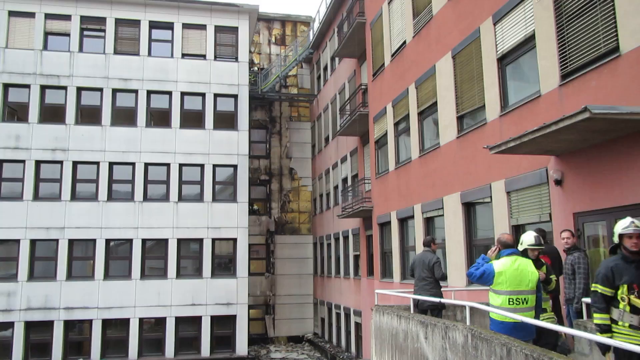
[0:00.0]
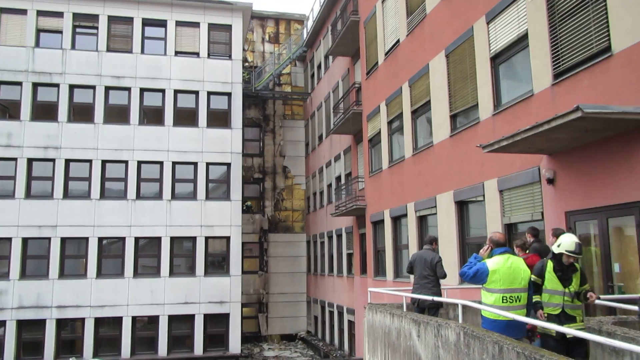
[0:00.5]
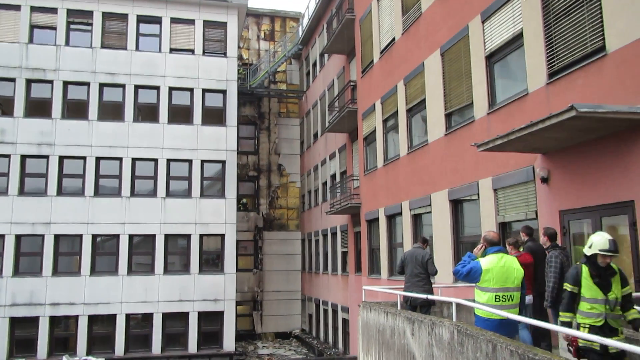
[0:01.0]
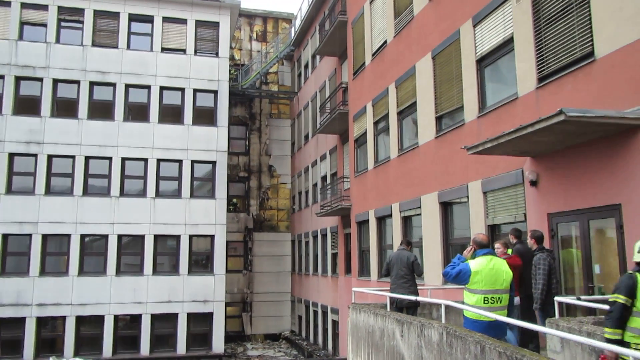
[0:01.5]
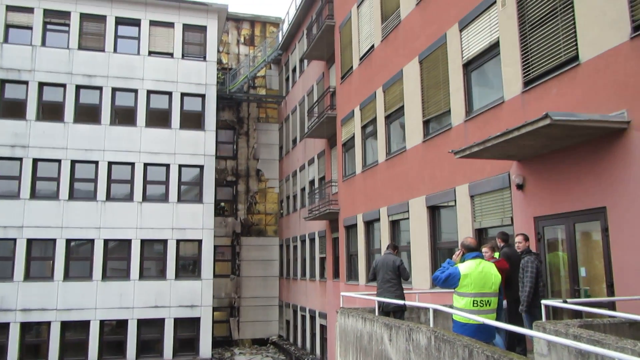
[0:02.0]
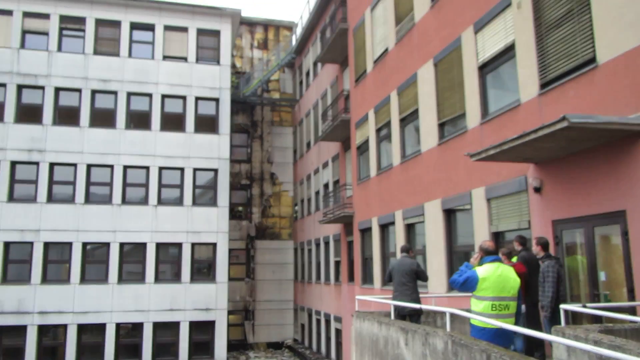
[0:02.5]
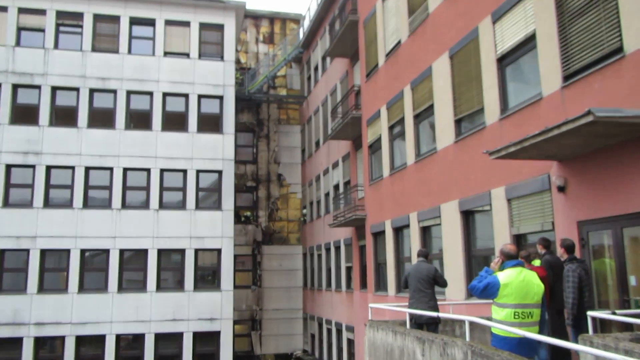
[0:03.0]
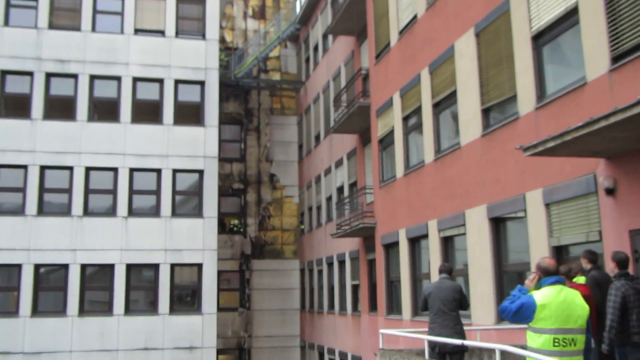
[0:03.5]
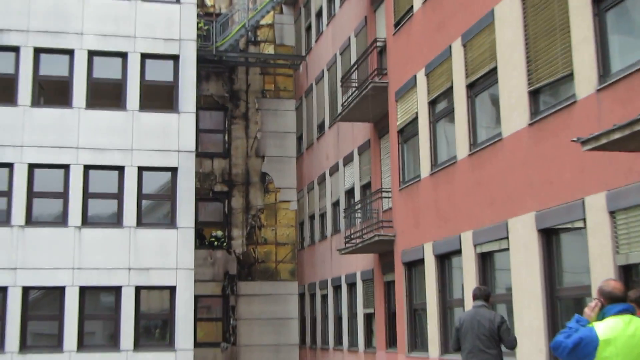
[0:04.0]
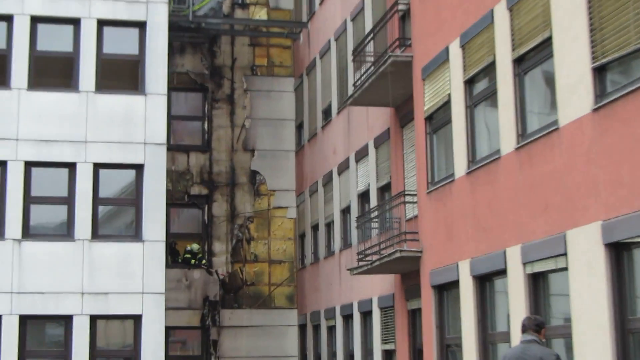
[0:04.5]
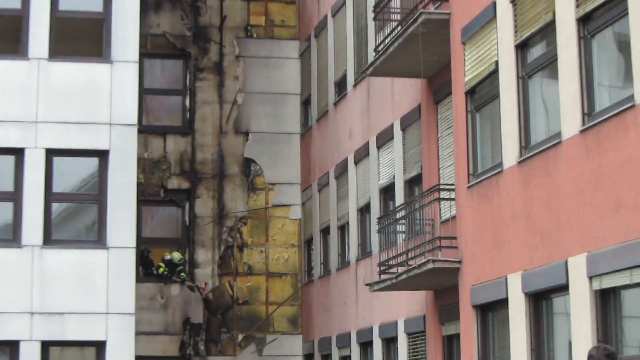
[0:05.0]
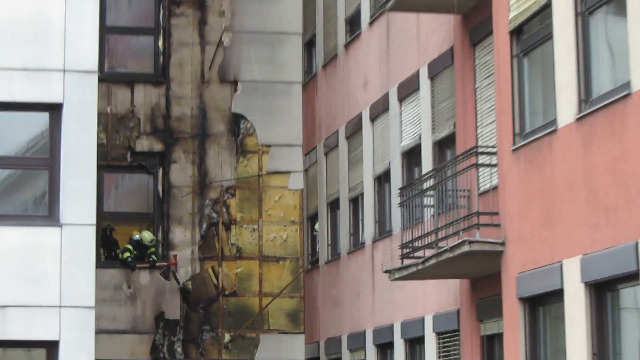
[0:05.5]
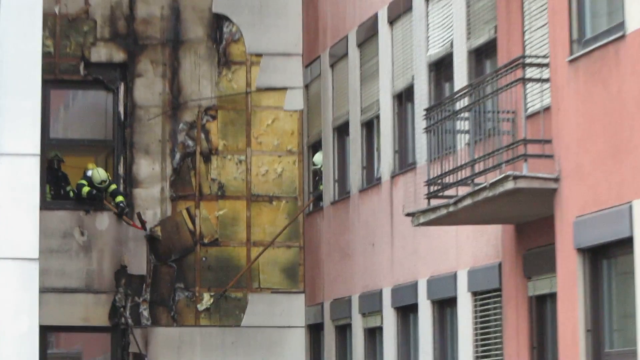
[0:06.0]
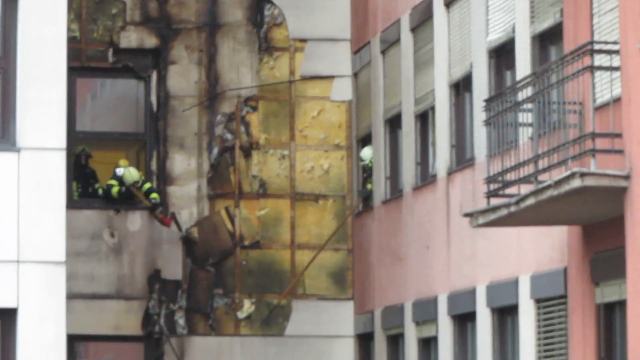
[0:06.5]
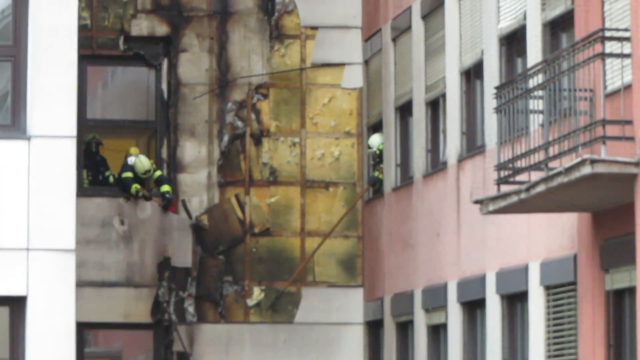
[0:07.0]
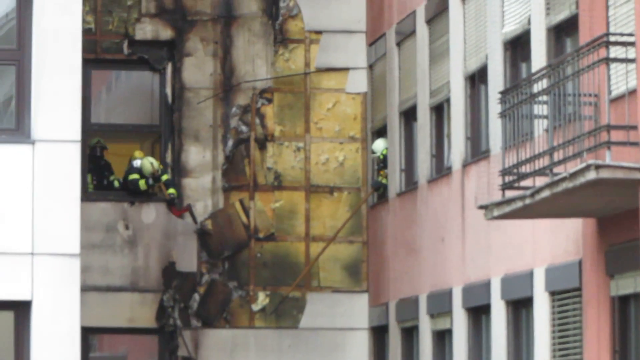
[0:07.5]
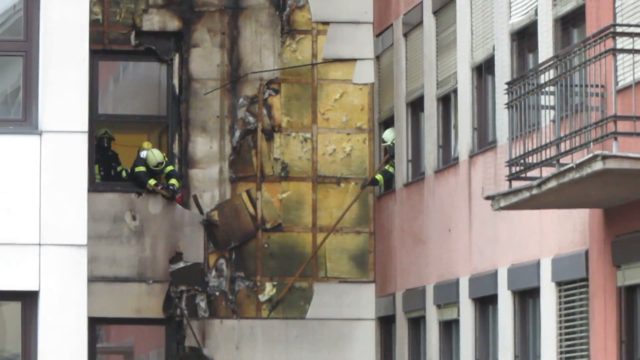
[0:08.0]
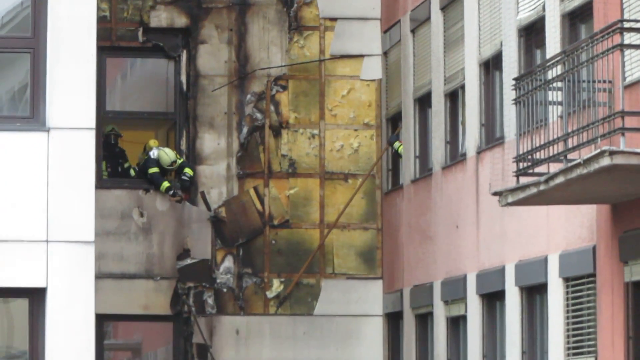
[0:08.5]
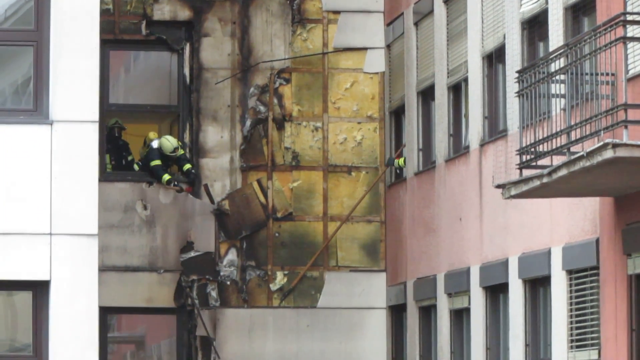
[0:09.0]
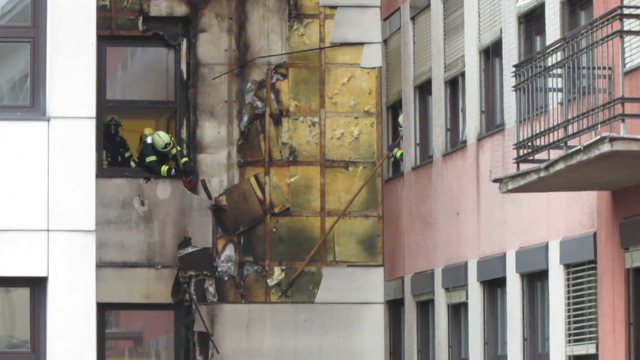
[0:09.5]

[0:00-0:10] Buildings fill the view: a white square building faces forward, and the side of a pink building with balconies is visible. Between the white and the pink building is a column of the white building that looks completely burnt out, so the white building appears to have caught on fire. On the right, a ramp leads up to the pink store, and firemen, men wearing yellow high-visibility vests, are present. The camera then zooms in on a window in the white building and on the pink building, where firemen use crowbars to pry away parts of the outer surface of the white building that were damaged by the fire.